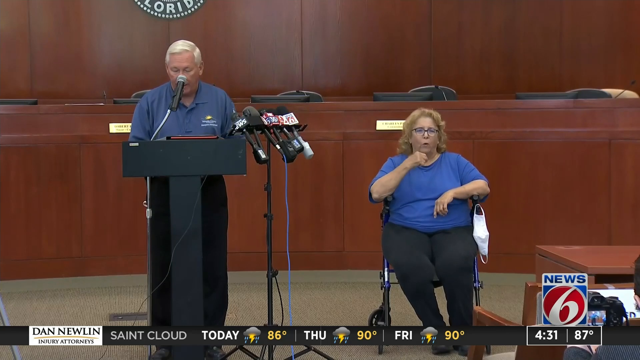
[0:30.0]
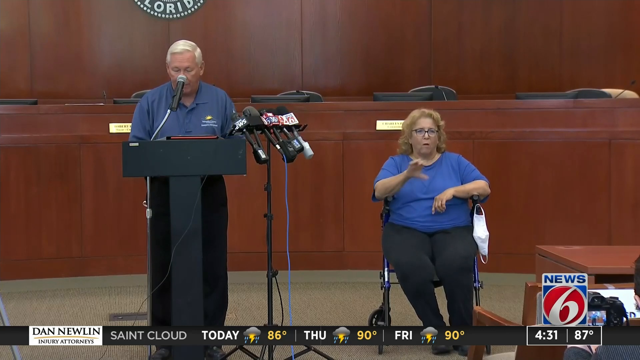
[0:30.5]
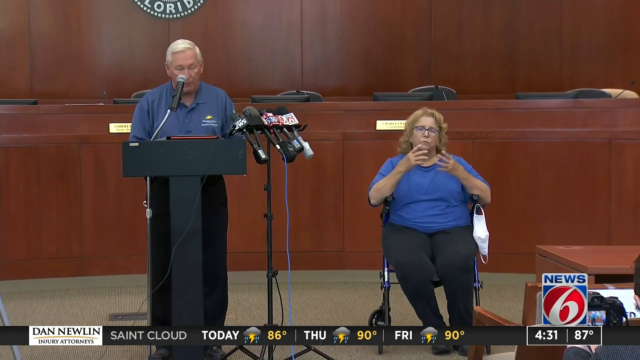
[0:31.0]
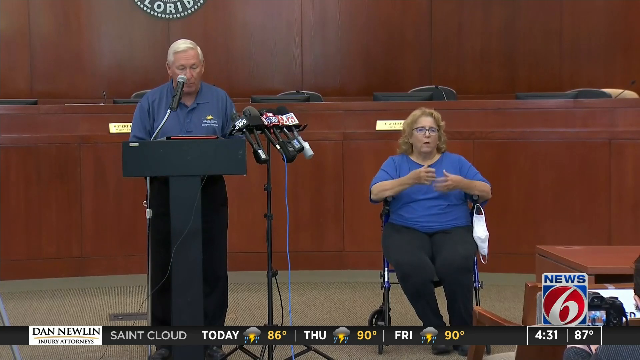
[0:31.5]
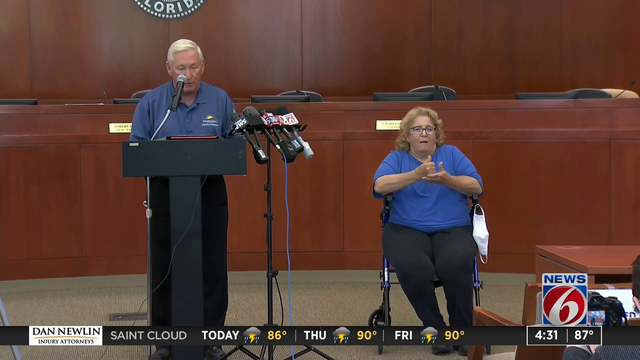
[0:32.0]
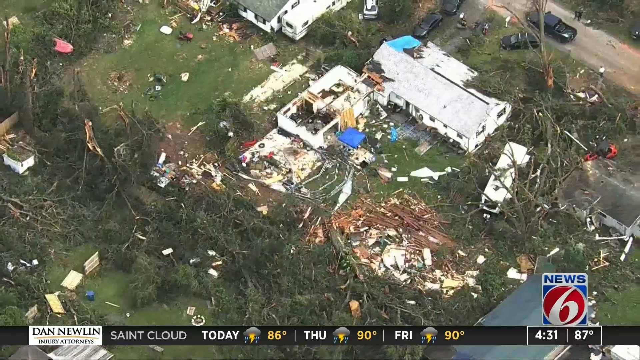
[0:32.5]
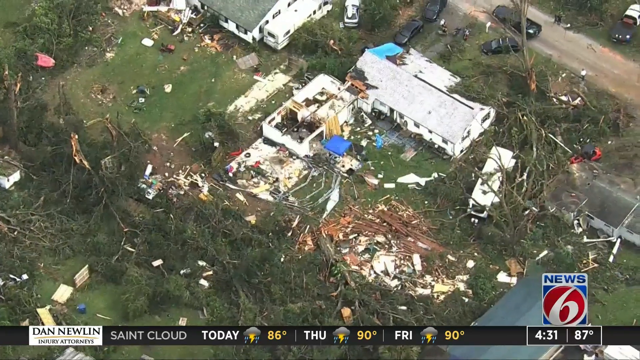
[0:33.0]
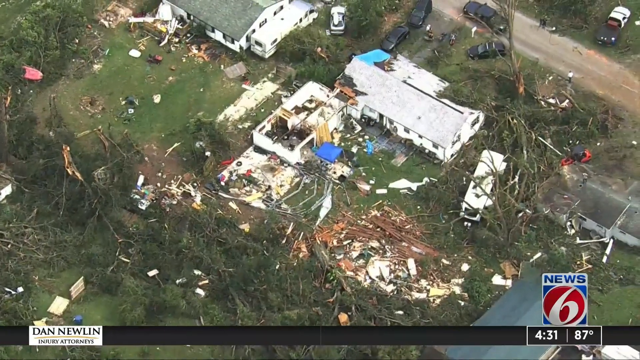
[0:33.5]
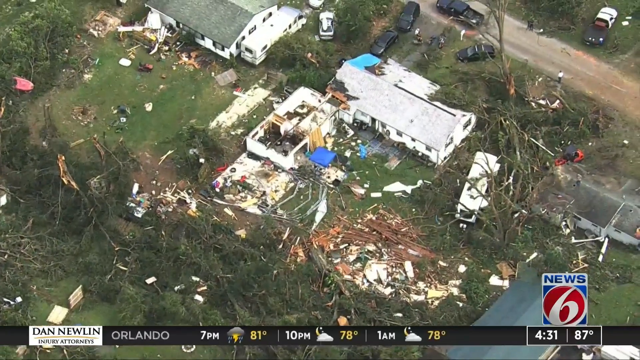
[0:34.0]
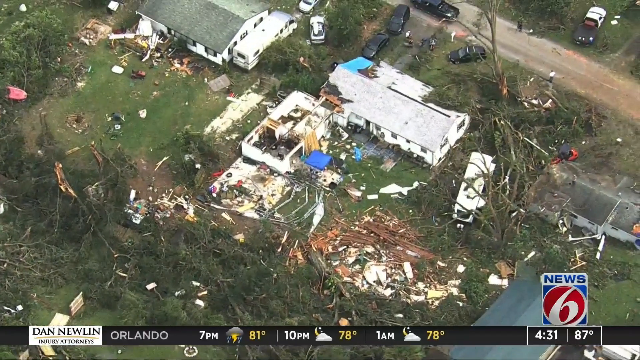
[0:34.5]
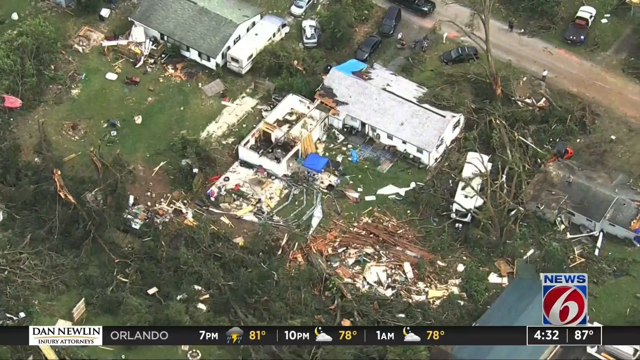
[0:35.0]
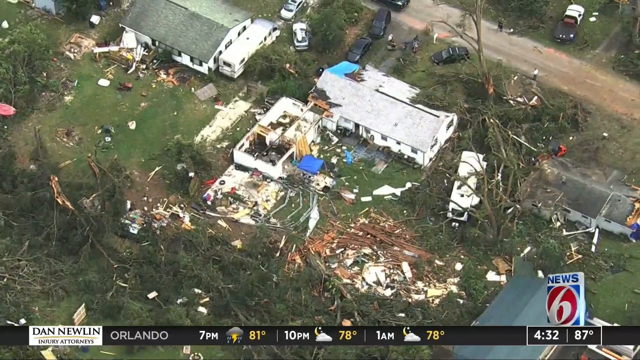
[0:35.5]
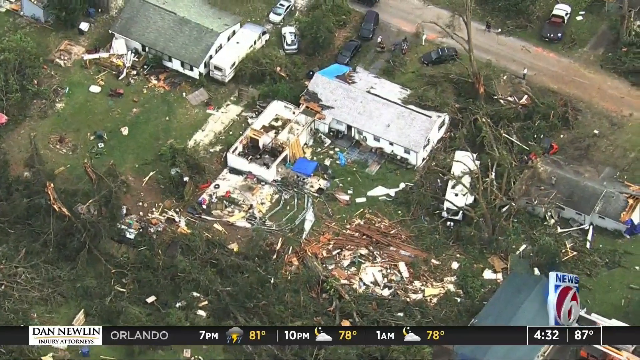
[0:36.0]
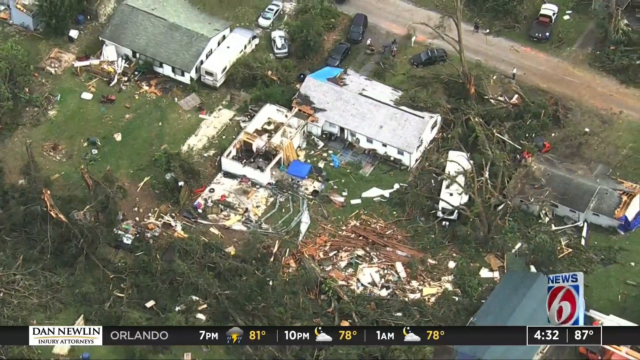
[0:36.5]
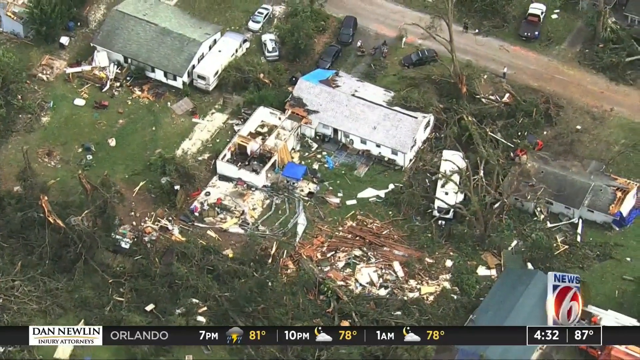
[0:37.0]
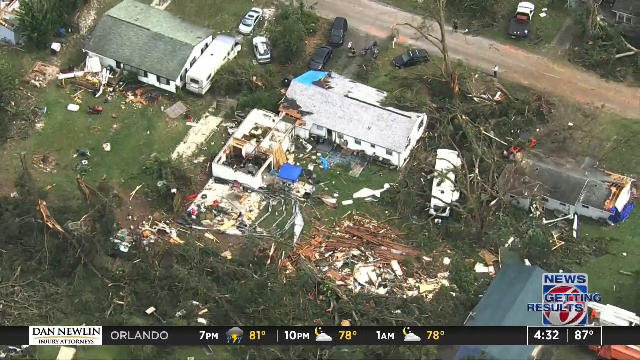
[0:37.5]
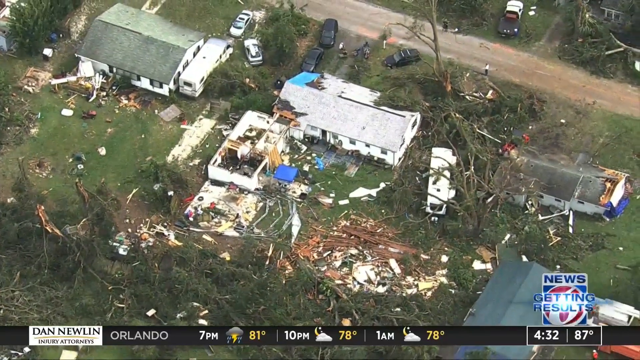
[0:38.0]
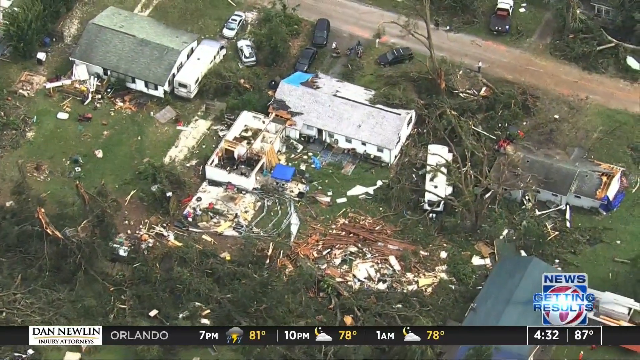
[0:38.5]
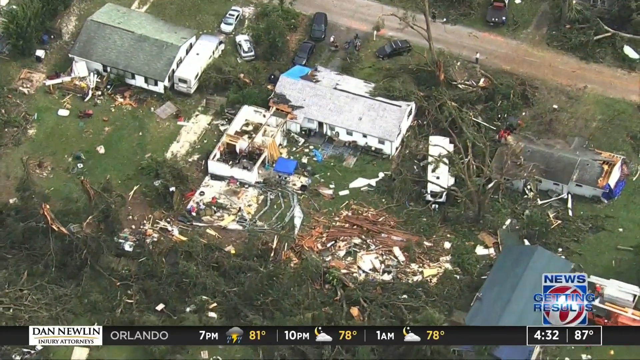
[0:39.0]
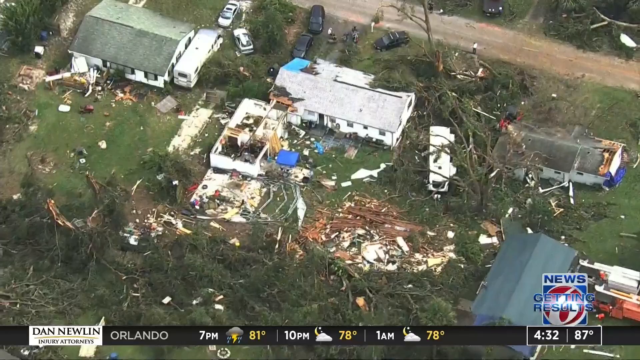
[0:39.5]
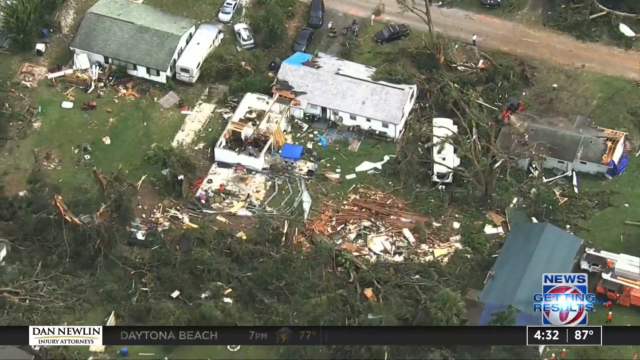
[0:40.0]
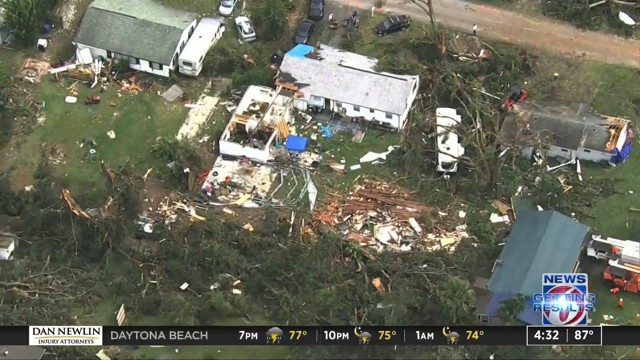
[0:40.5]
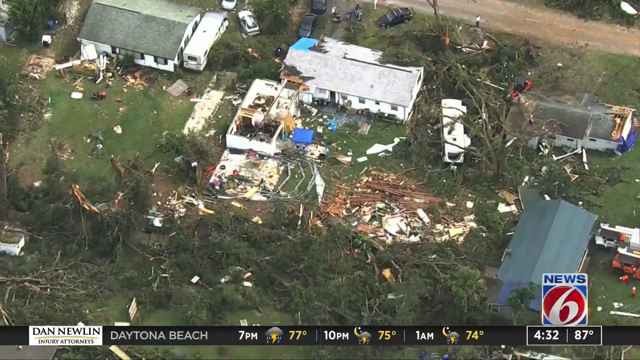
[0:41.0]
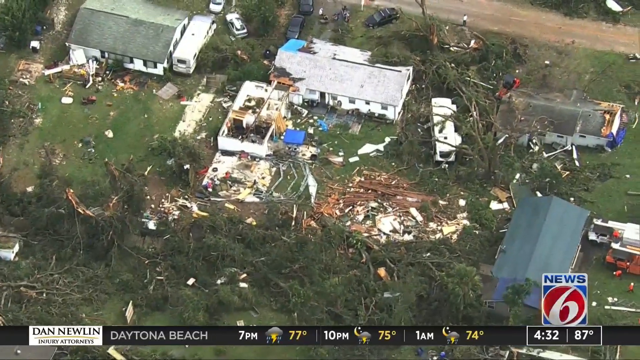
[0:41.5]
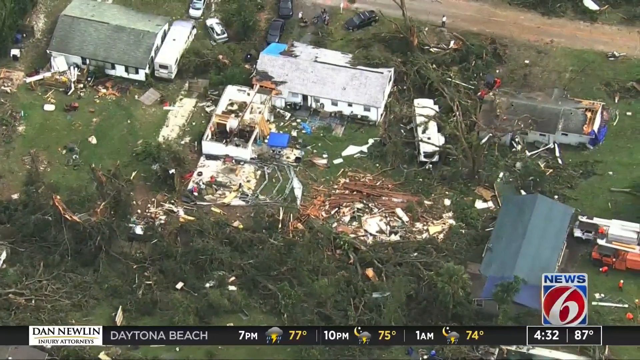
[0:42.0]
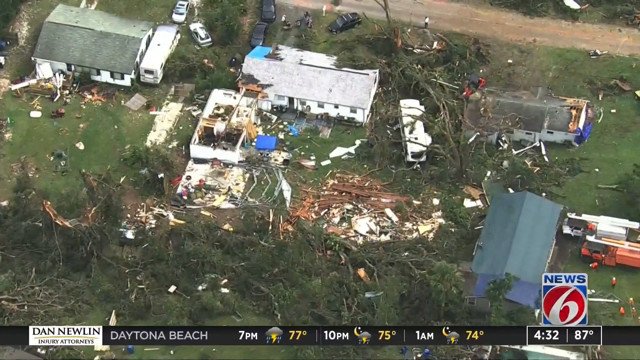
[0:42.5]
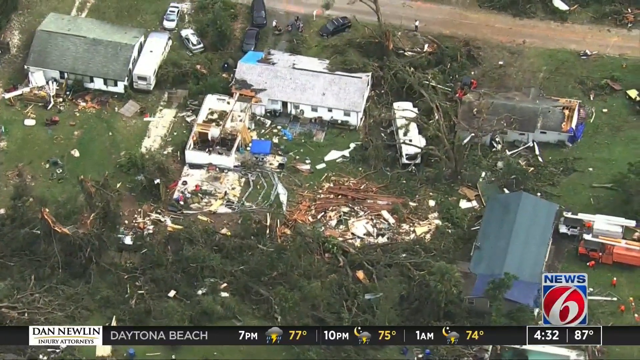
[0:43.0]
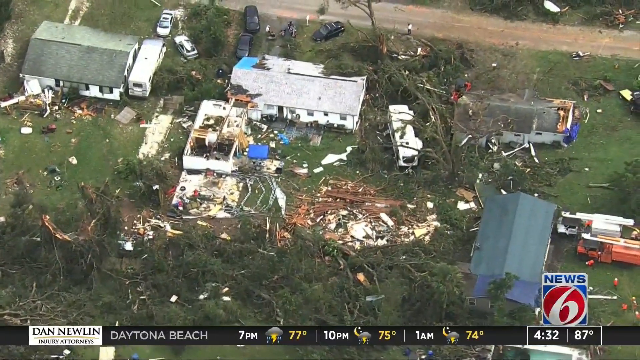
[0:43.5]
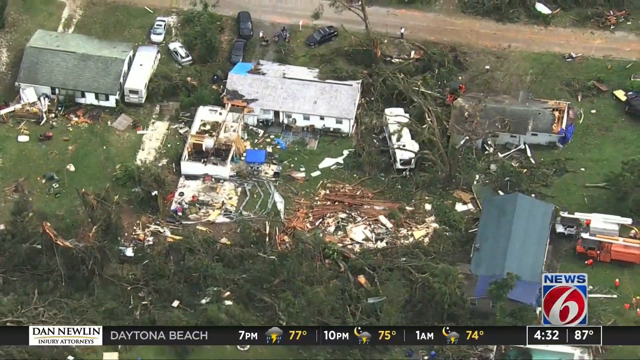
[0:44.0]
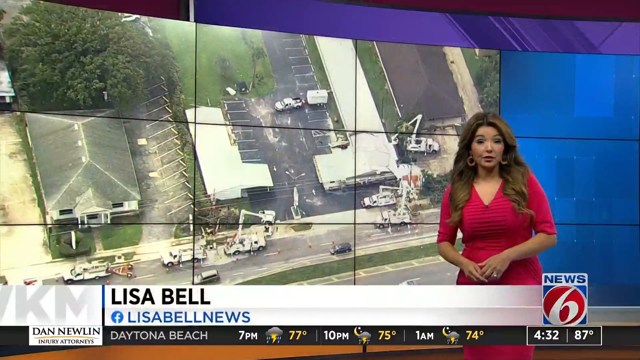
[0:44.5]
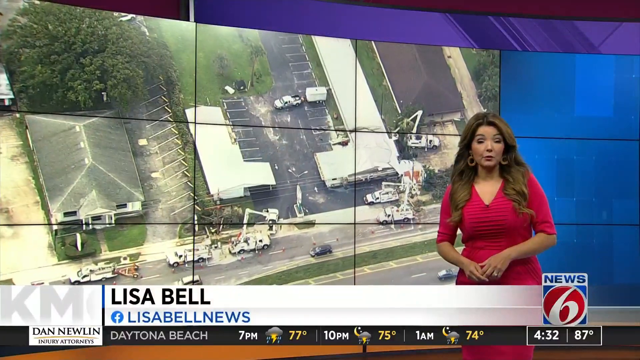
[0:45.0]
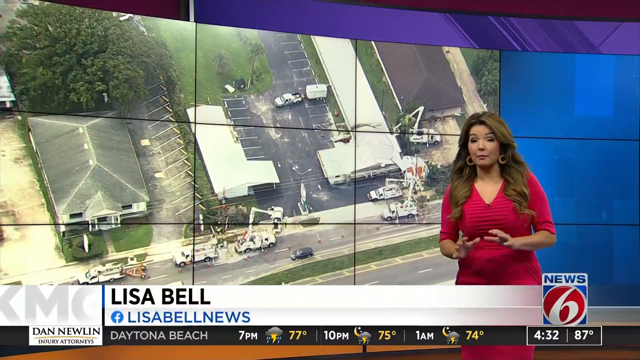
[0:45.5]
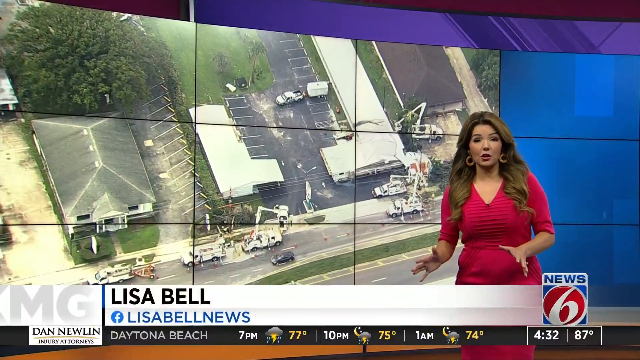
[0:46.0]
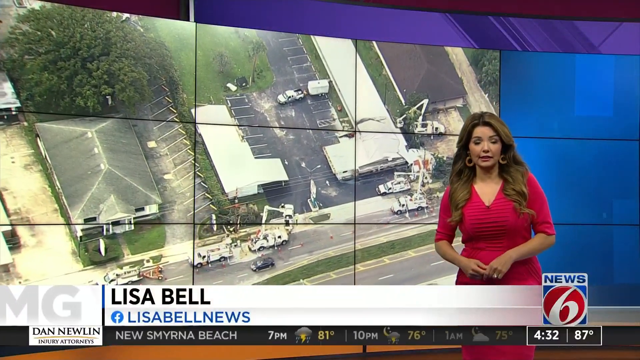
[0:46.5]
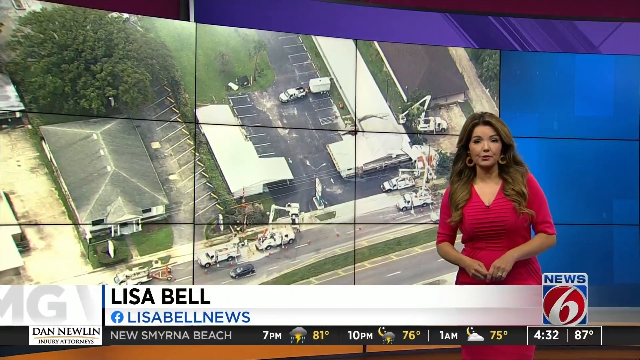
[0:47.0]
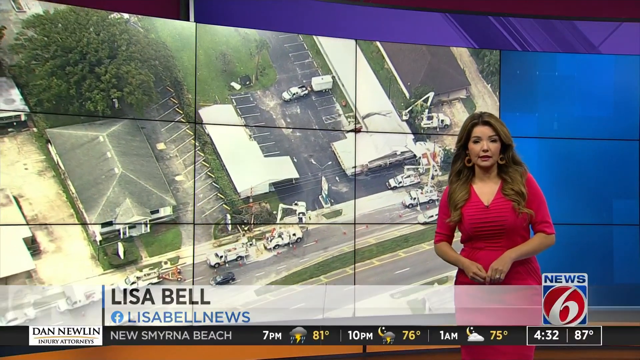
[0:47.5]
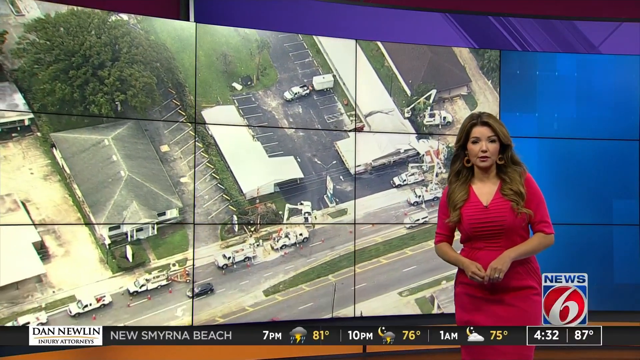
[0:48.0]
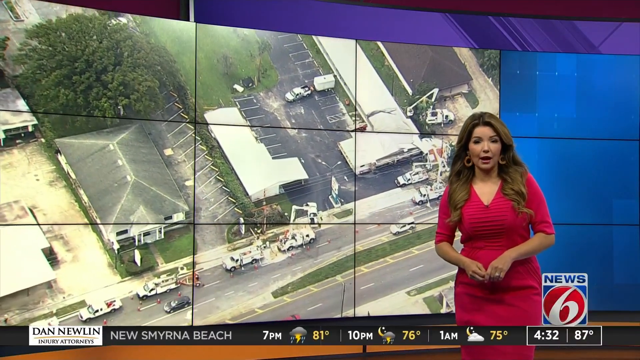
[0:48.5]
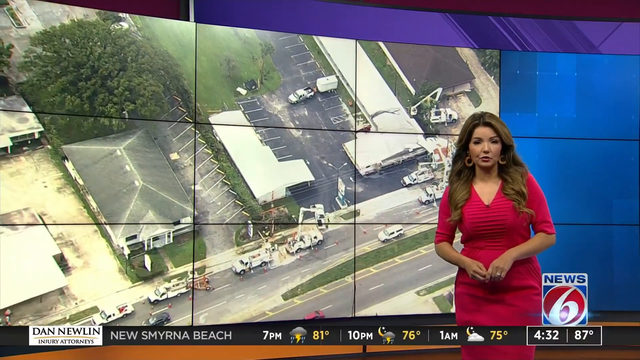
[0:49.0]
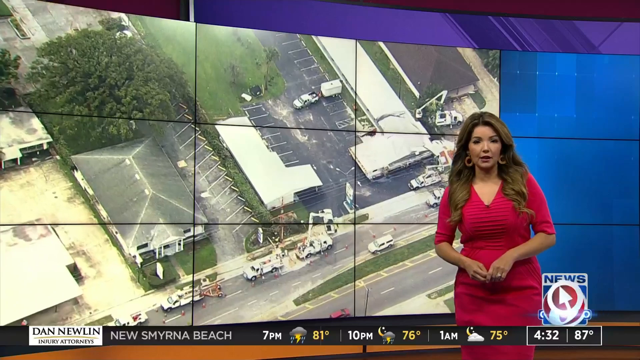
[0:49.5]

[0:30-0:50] A woman sits in a wheelchair doing sign language; a mask is attached to her wheelchair. There are about five microphones and about five chairs behind them. A man speaks into the microphones; he wears a blue shirt and black pants, and she also wears a blue shirt and black pants. An aerial view then shows an area damaged by a storm, with debris everywhere and trucks going up and down the road. A spinning "News 6" logo with "getting results" appears in the corner as the view zooms over everything: trash, debris and houses. A reporter with dark hair in a red dress stands by a screen that shows damage in the area, and she reports on it.